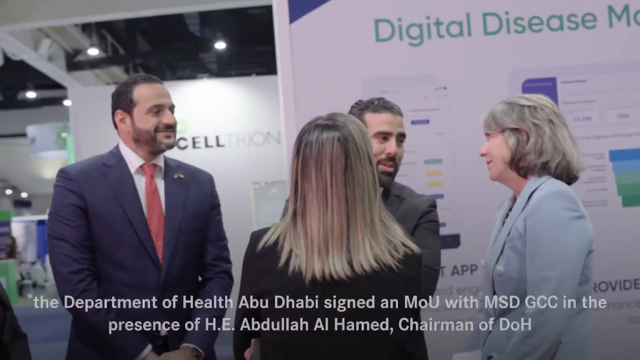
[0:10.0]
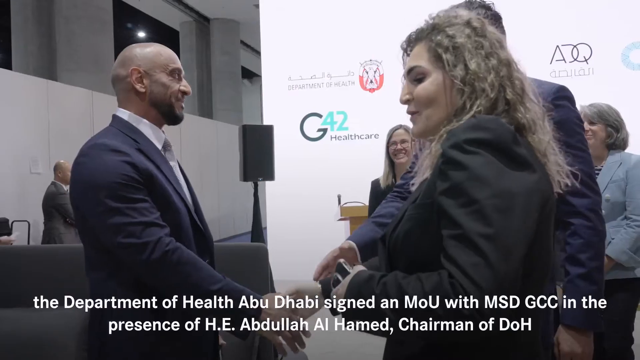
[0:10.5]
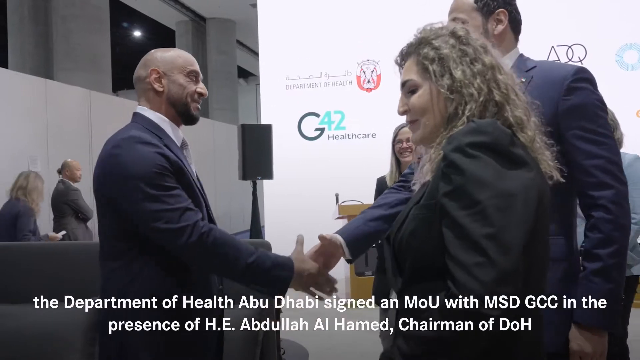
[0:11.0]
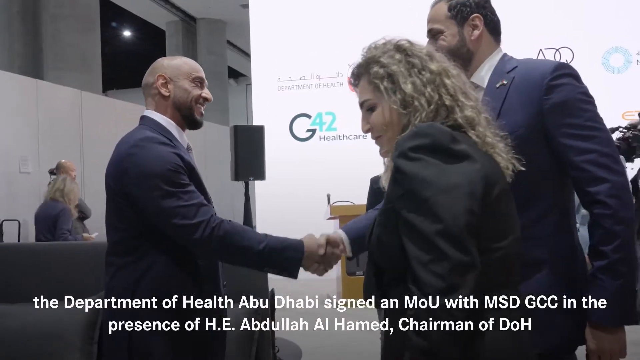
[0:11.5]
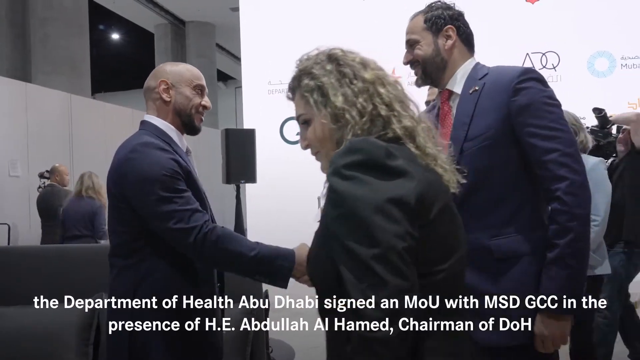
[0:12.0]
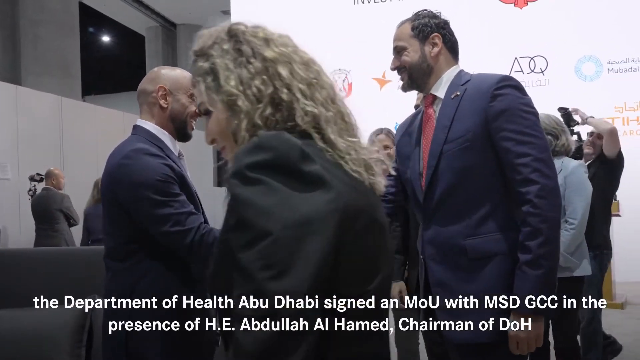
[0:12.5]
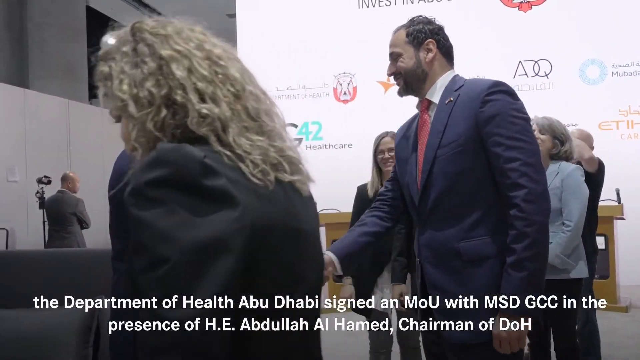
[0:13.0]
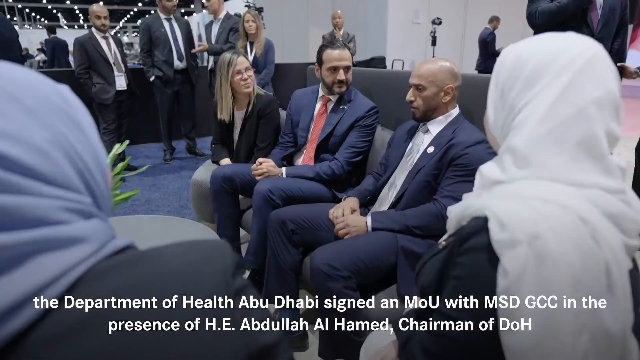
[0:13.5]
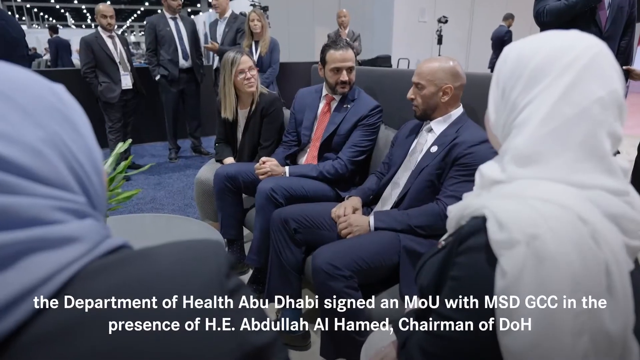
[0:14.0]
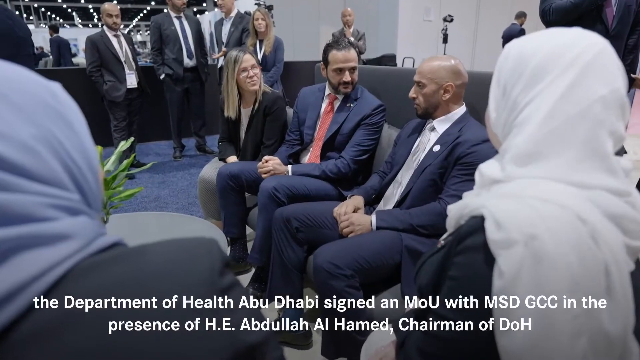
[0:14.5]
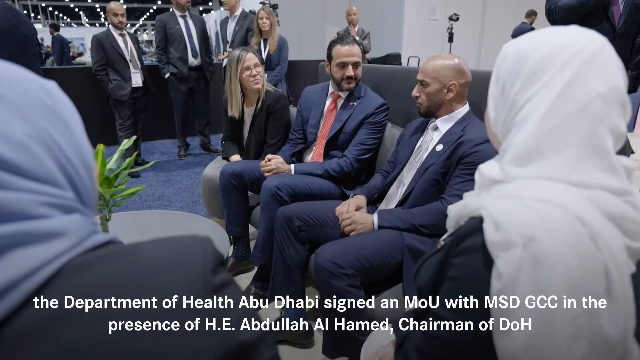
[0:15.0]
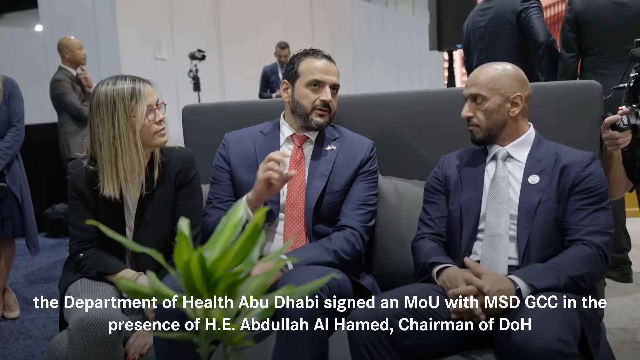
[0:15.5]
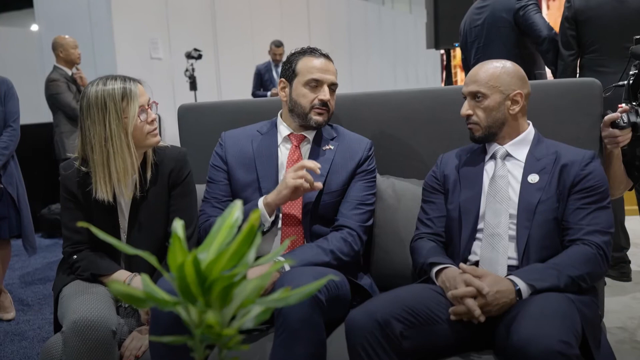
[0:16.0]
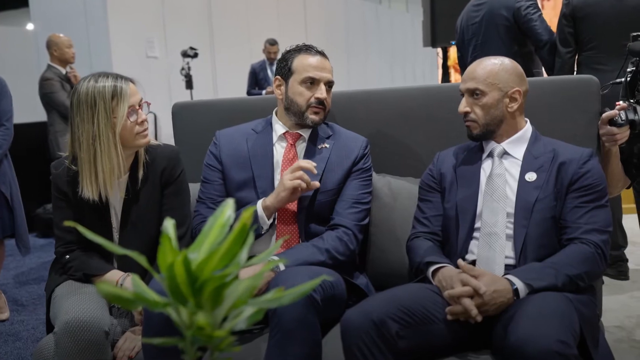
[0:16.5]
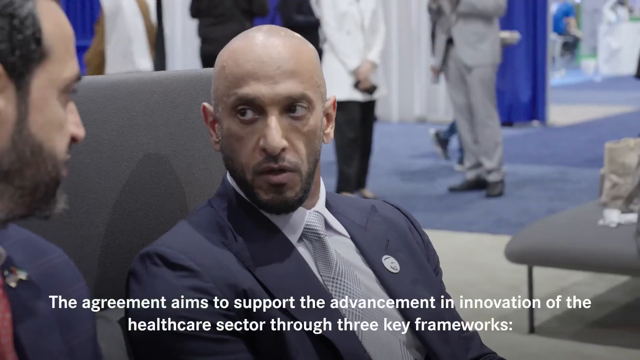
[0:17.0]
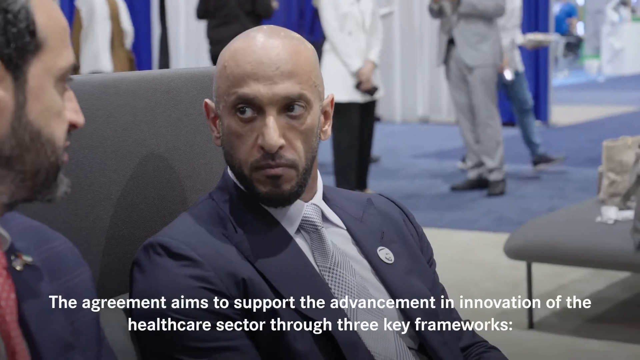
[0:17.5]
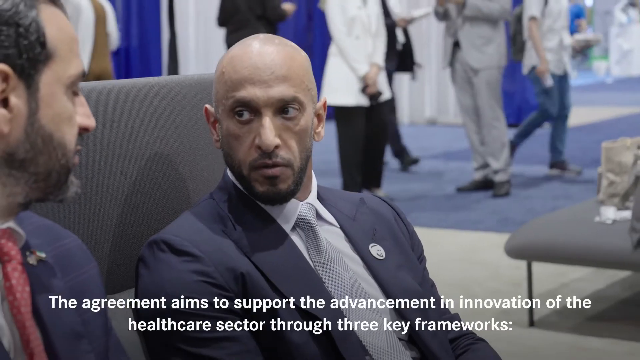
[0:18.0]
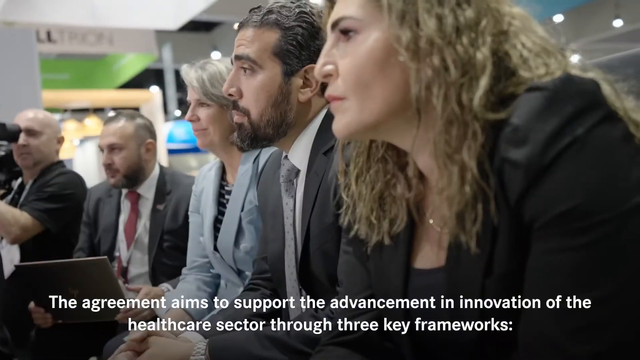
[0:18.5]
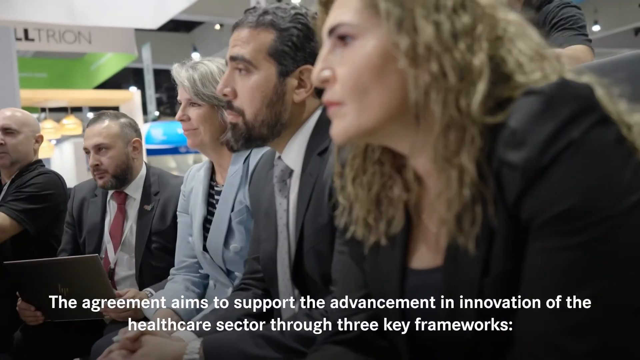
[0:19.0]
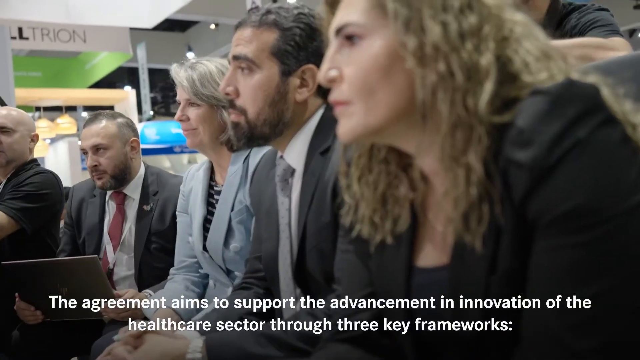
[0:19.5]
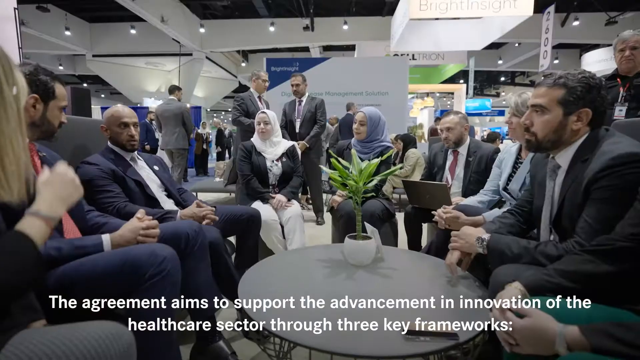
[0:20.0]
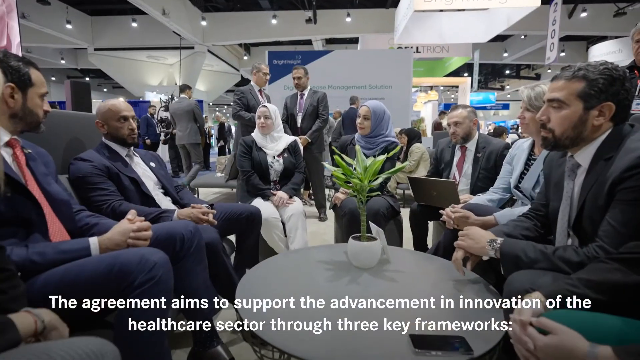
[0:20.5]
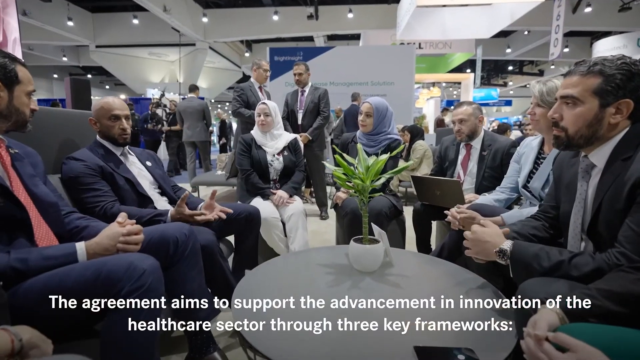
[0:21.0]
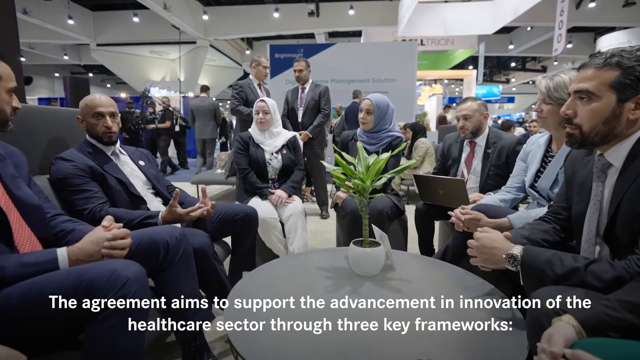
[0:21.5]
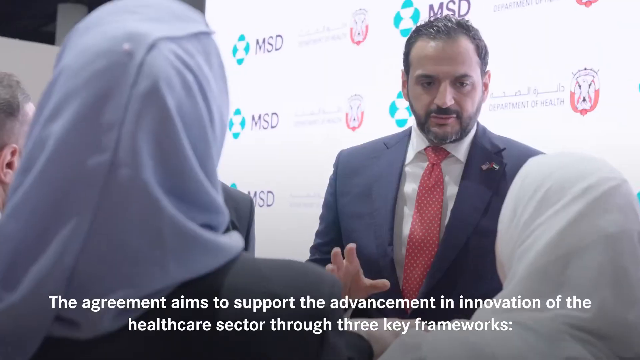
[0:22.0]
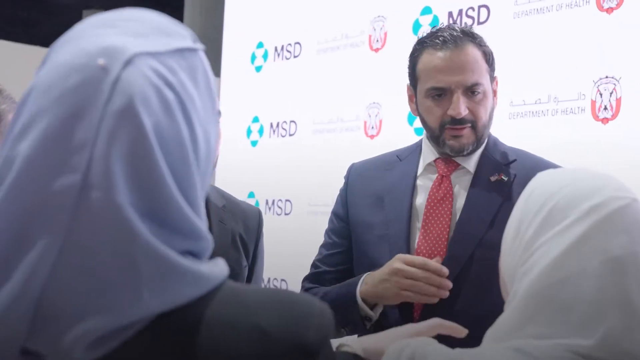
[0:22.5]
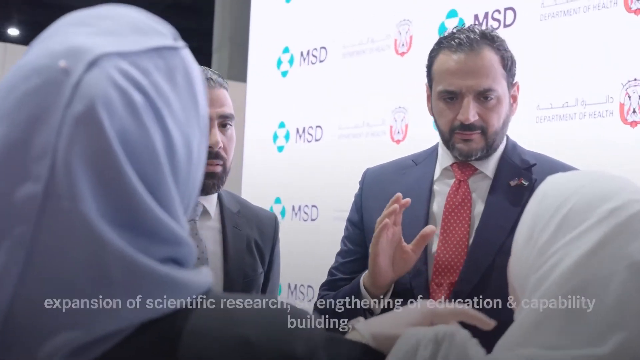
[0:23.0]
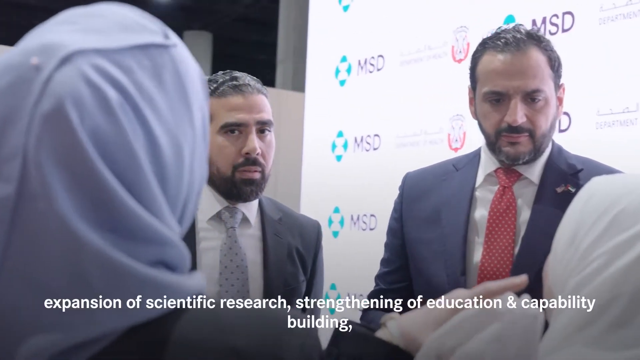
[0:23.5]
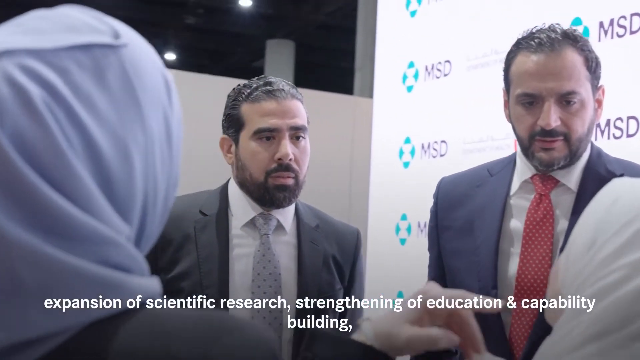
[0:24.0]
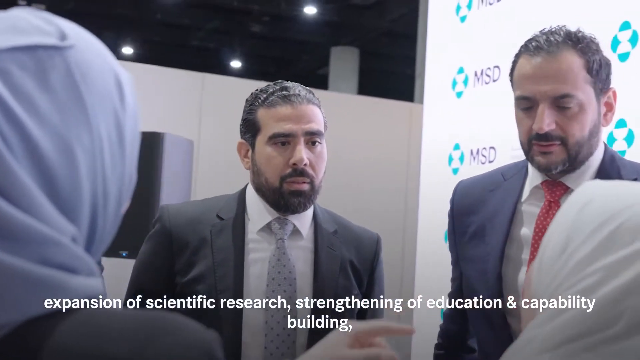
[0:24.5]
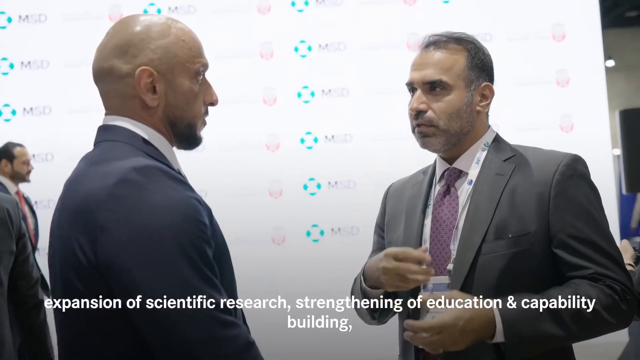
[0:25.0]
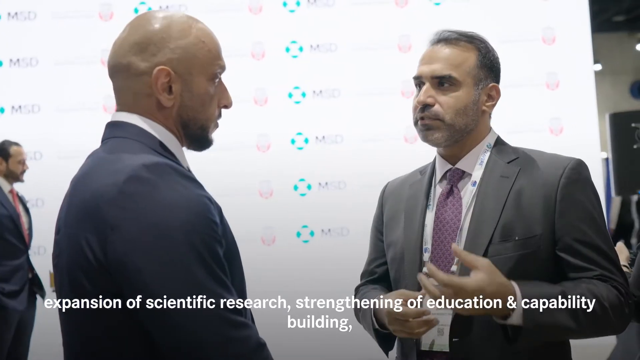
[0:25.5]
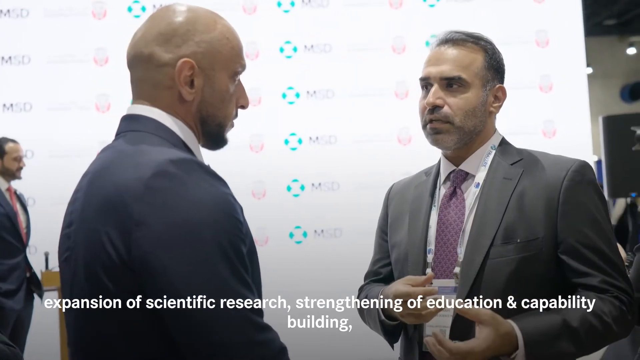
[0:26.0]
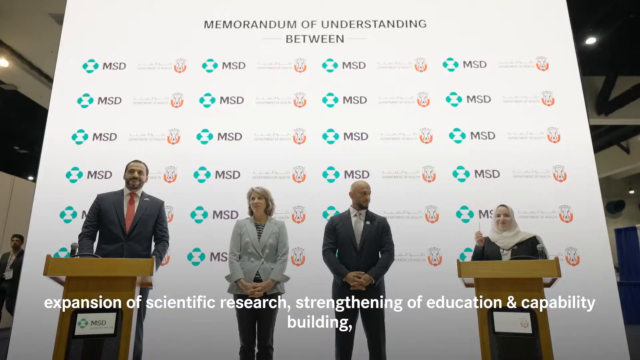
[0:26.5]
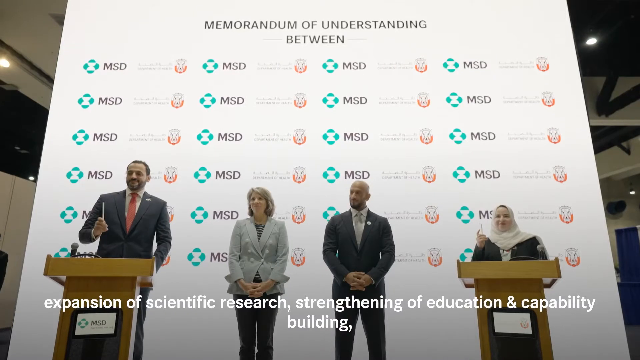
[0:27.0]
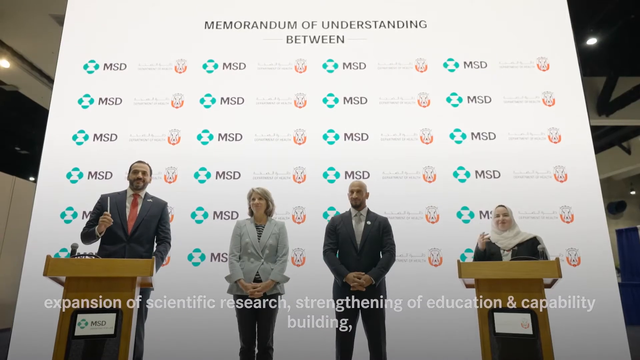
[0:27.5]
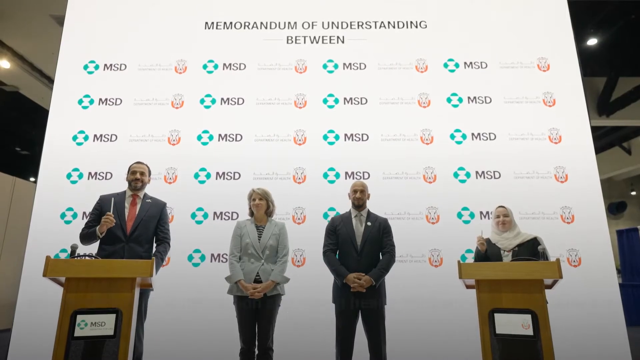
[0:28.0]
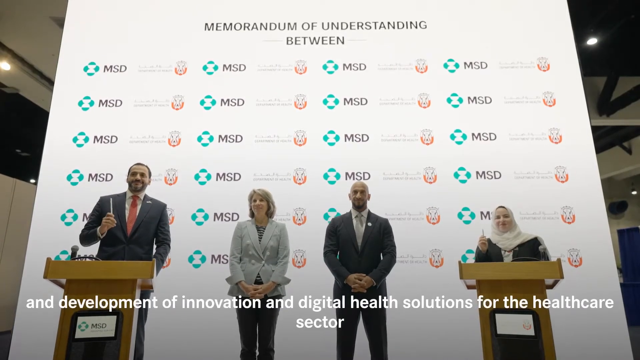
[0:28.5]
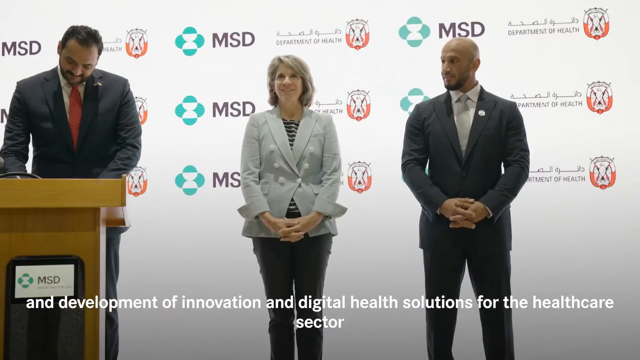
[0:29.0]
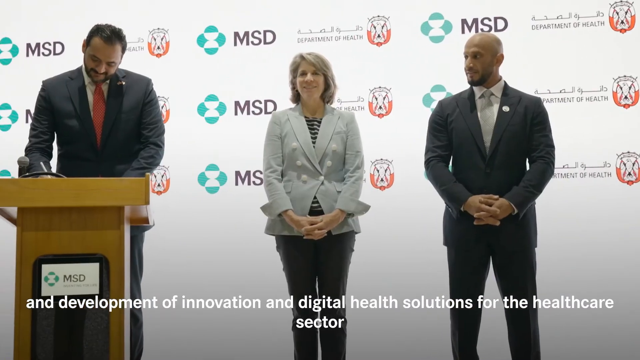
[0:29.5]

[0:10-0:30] A tall man in a very nice blue suit with a red tie appears in a series of scenes, seemingly speaking with groups of people, some larger, maybe around 10 people, and some smaller, of around 4 people. He also stands at a podium and speaks there. Each time he is shown speaking, he is very attentive and focused on the person he is speaking with, and he speaks with a very strong intensity. Other scenes show other people speaking as well. In one scene he stands at a podium on the left-hand side among a total of four people, two women and two men, and behind them is a huge banner or signboard that reads "Memorandum of Understanding Between MSD" along with a symbol whose accompanying words are not readable.